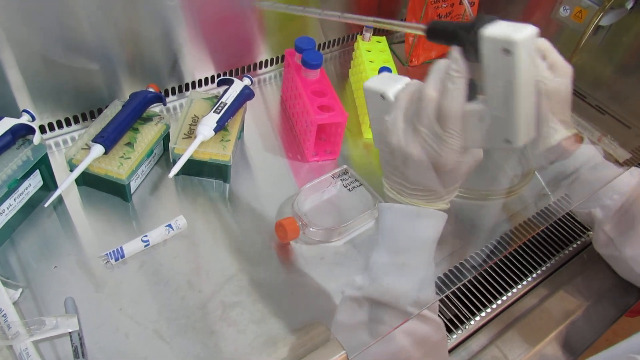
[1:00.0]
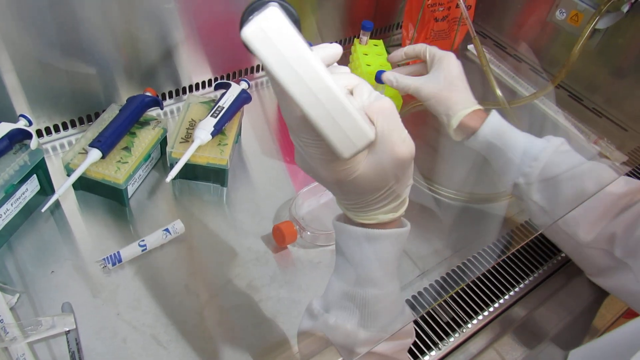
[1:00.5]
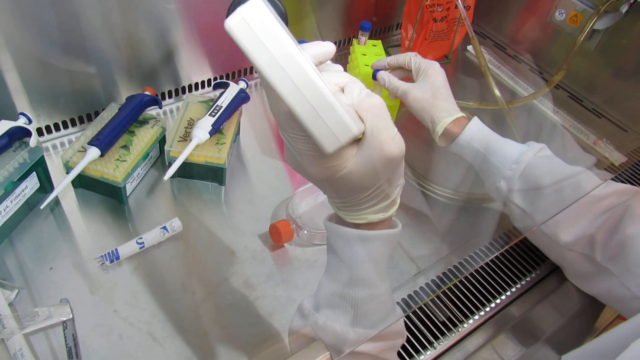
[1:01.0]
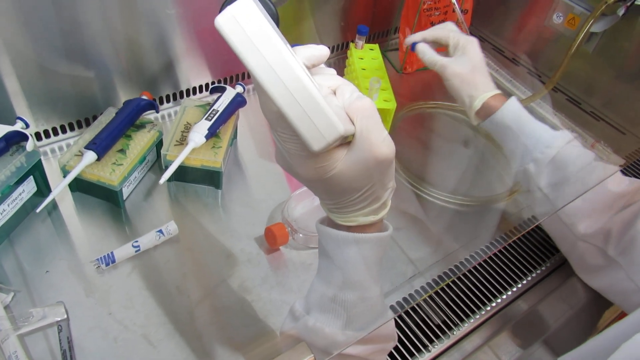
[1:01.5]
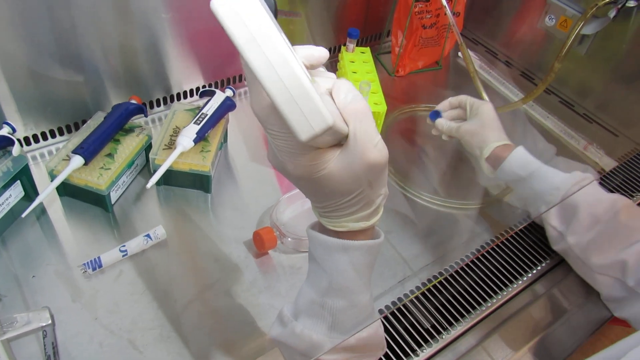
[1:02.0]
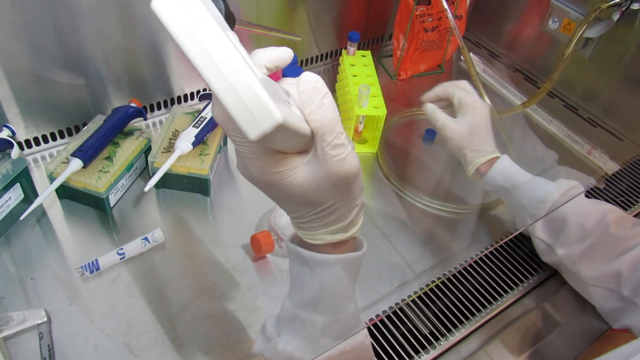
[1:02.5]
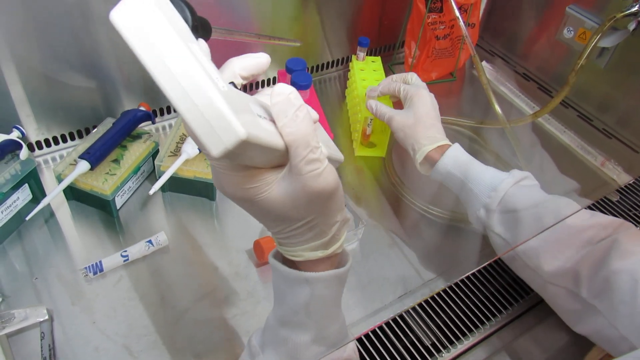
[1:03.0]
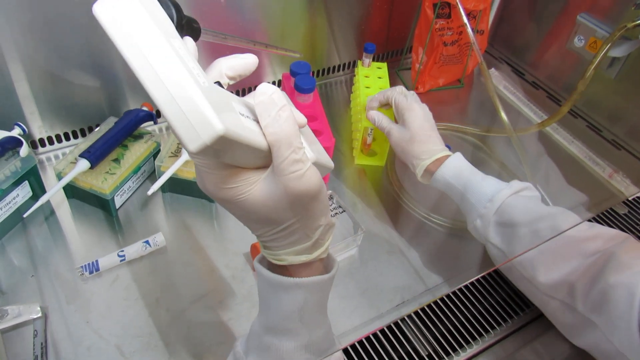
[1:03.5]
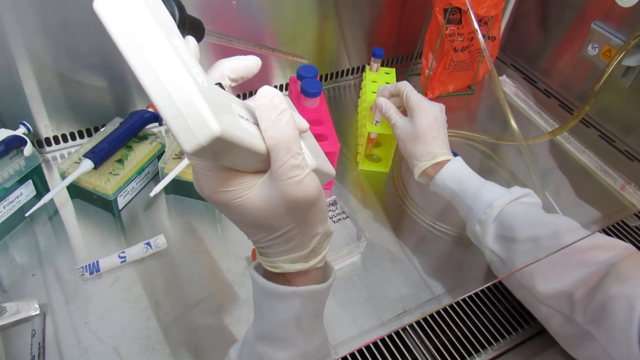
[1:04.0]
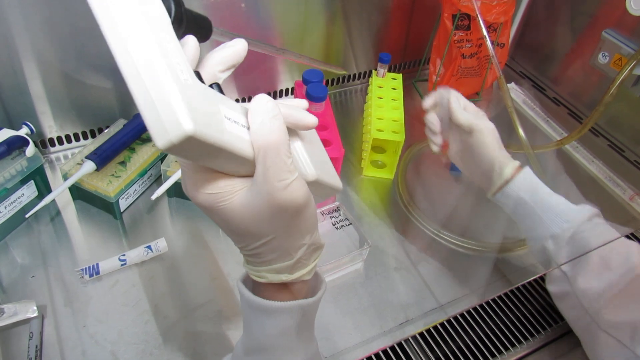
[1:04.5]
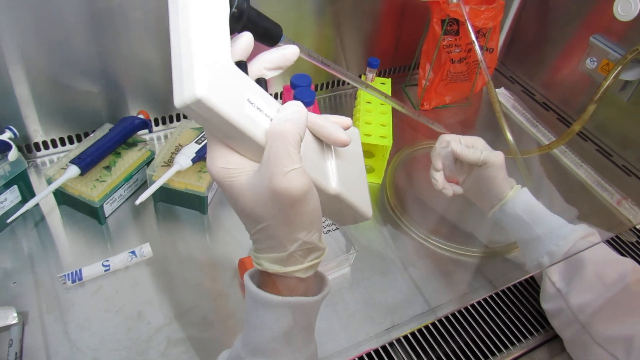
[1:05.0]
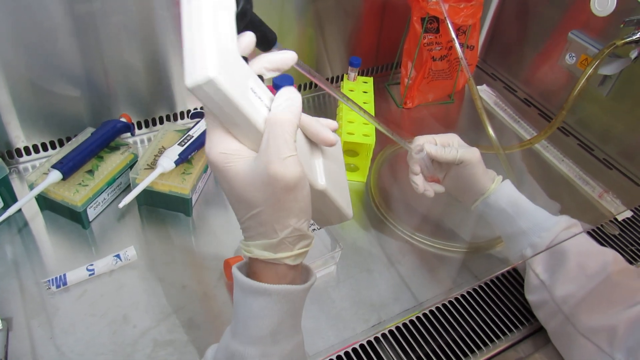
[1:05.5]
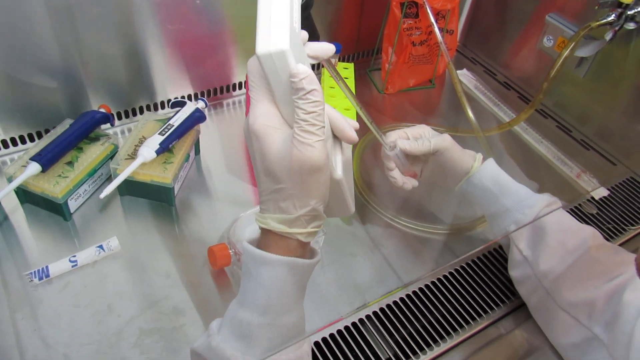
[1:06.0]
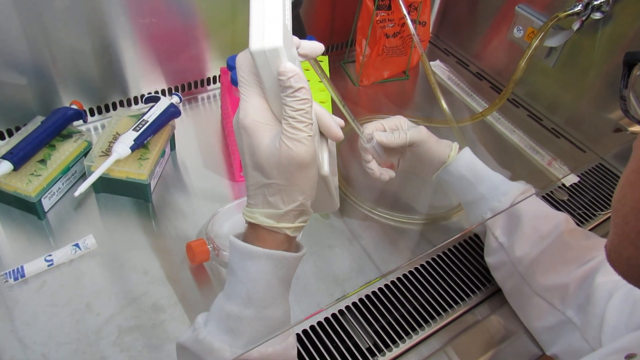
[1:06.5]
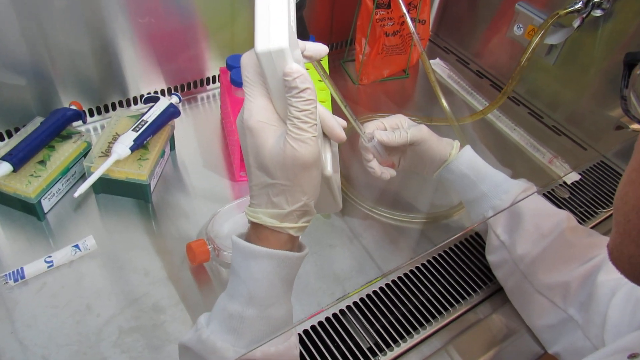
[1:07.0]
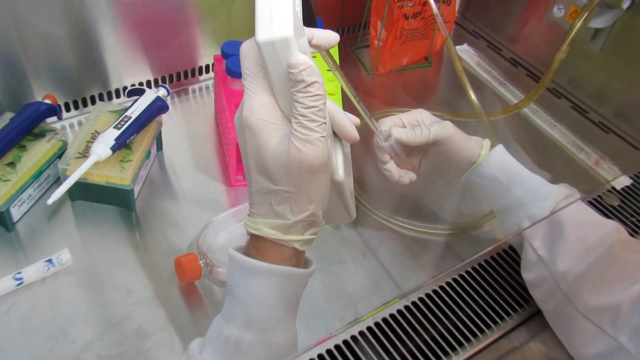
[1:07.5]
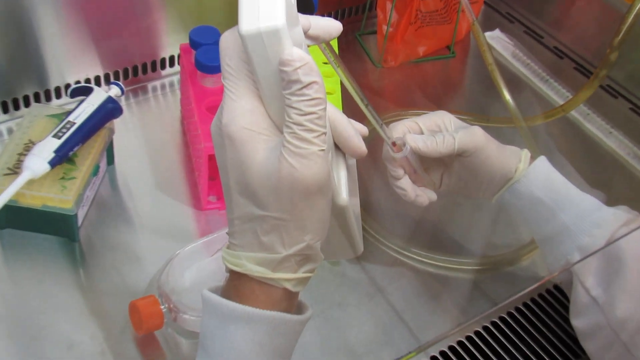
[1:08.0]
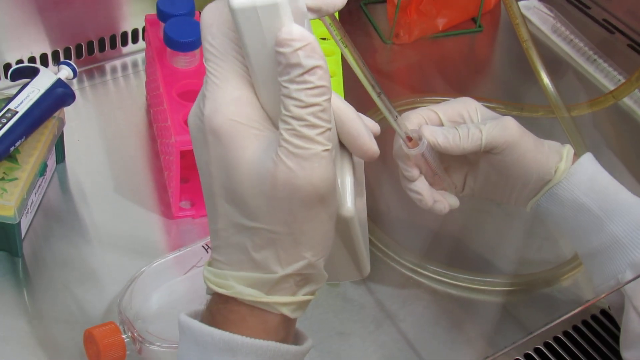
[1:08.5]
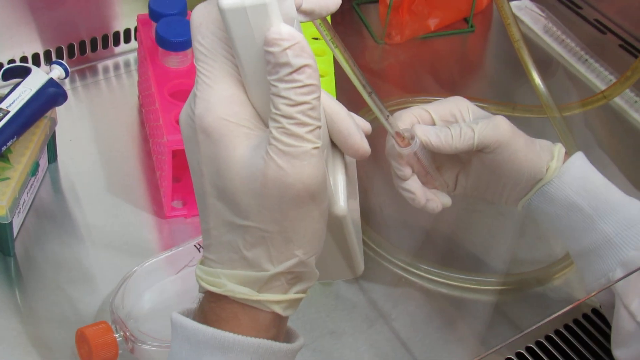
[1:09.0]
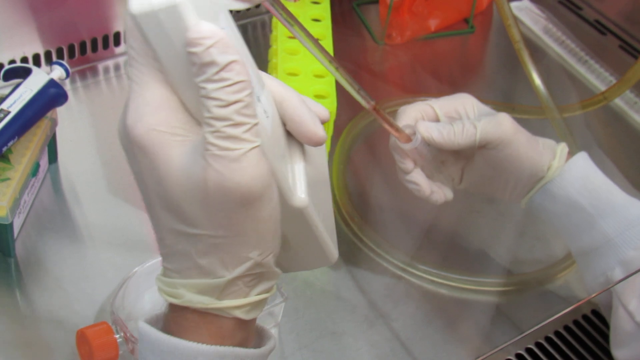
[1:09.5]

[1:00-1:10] The tip taken out of the hose-like apparatus is on another appliance that looks metal with a black end. The person holds it in the left hand, with all fingers except the thumb in front and the thumb wrapped around the right side. With the right hand, the person takes off the blue lid of a test tube in the neon green-yellow test tube holder, which holds two of them. The person takes the first one, on the left, out of the holder; it contains a reddish liquid, and they use the tool to suck some of it out.